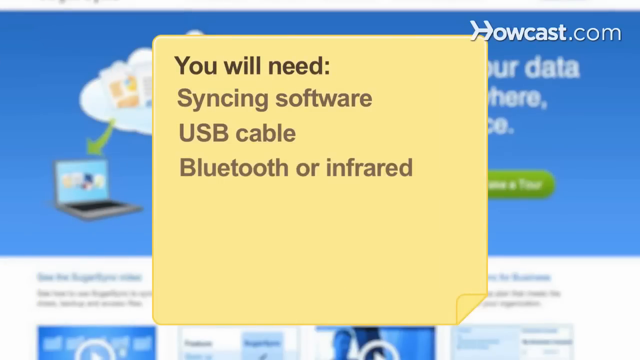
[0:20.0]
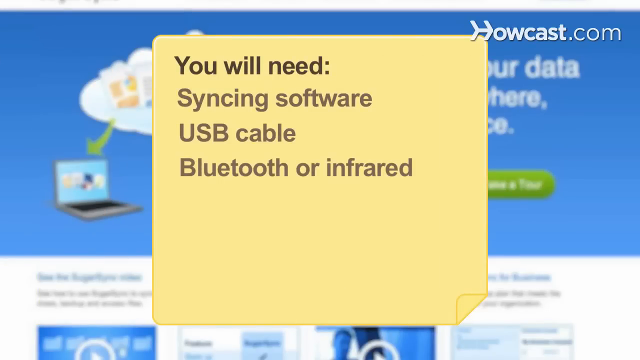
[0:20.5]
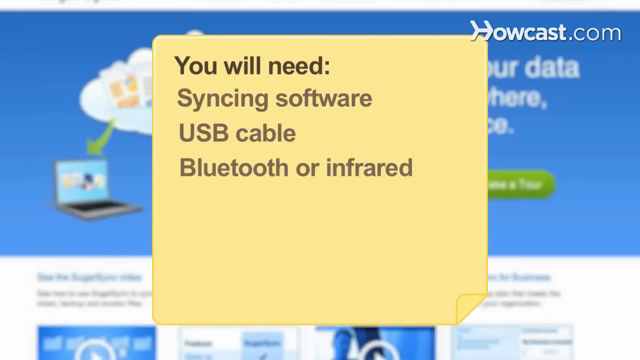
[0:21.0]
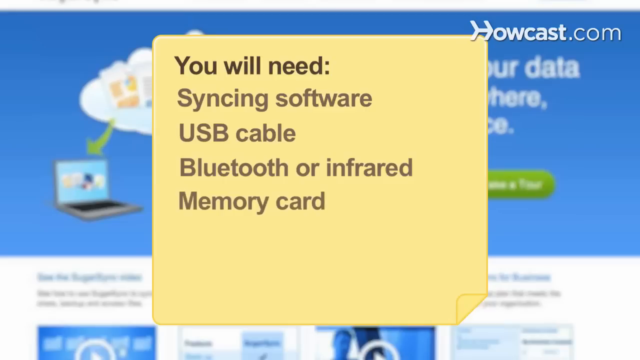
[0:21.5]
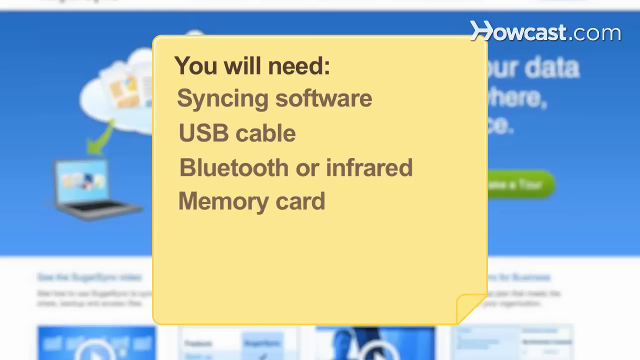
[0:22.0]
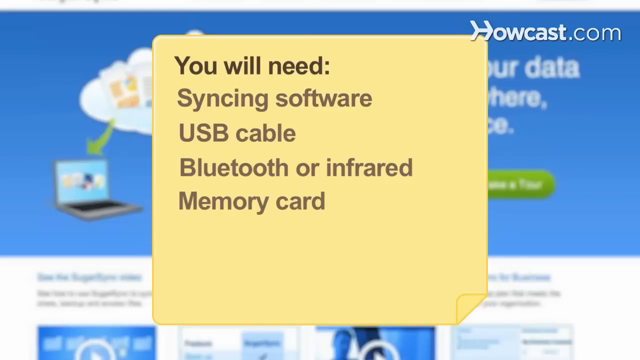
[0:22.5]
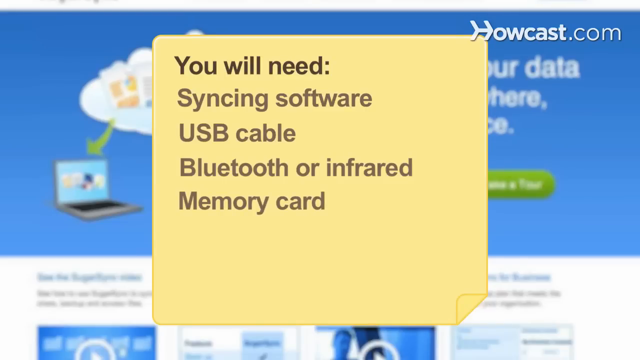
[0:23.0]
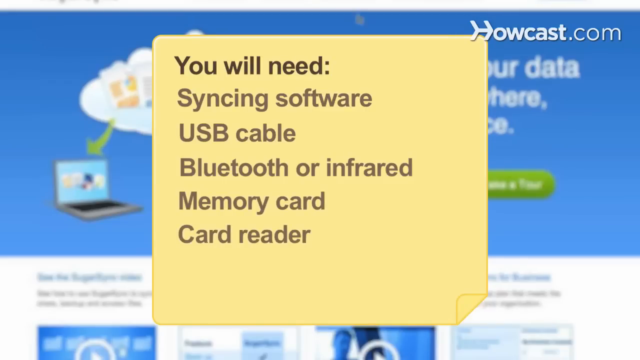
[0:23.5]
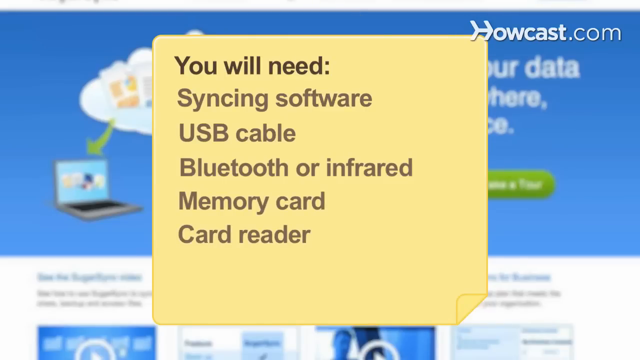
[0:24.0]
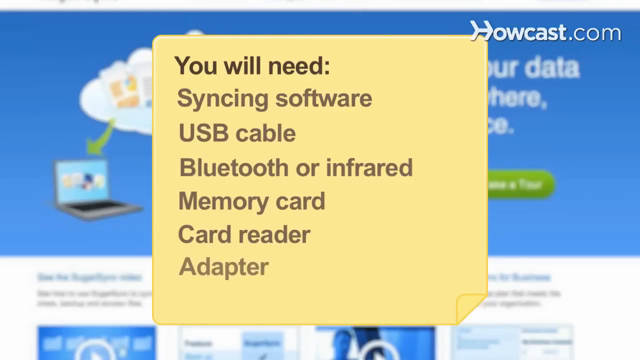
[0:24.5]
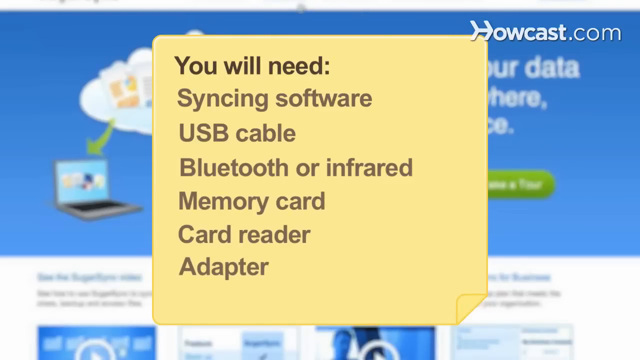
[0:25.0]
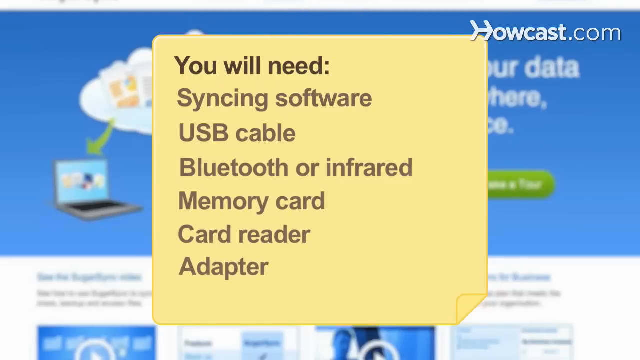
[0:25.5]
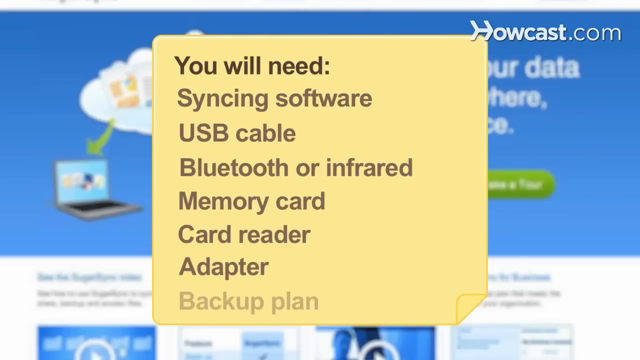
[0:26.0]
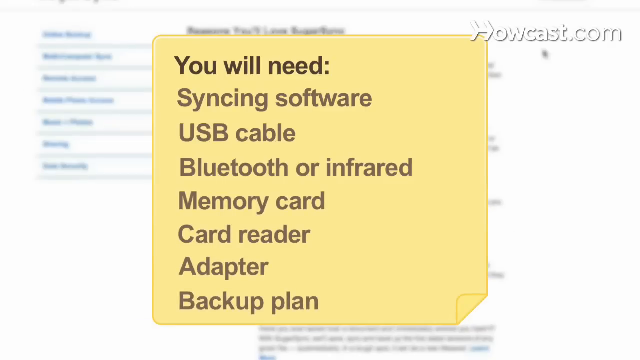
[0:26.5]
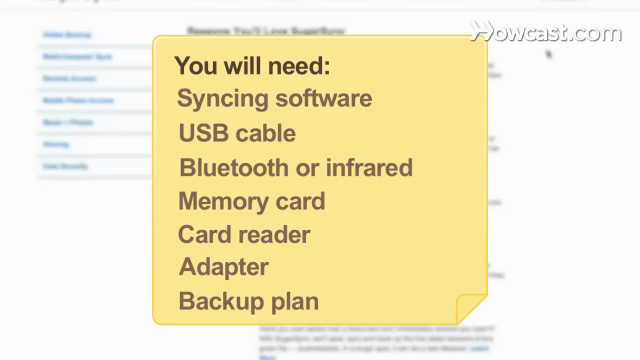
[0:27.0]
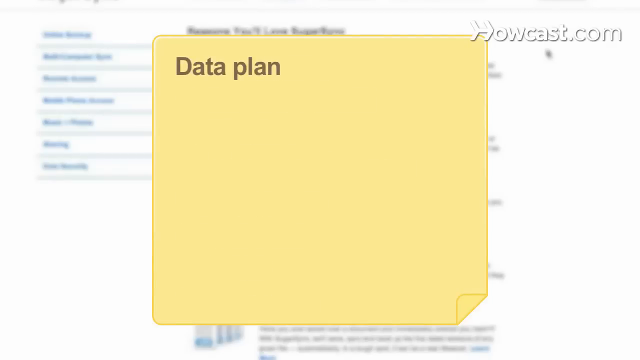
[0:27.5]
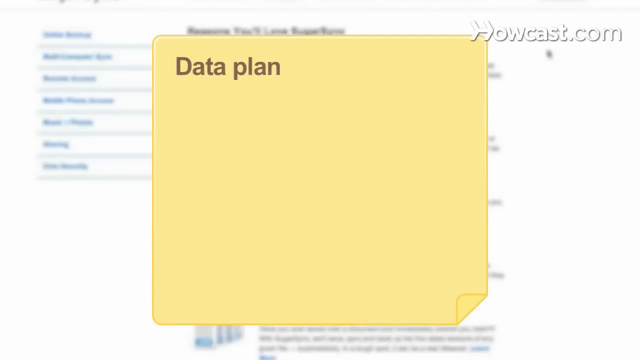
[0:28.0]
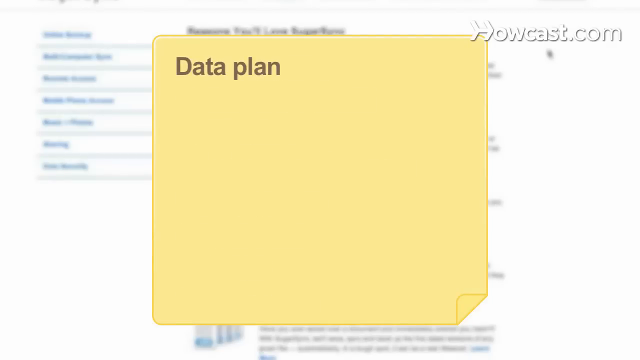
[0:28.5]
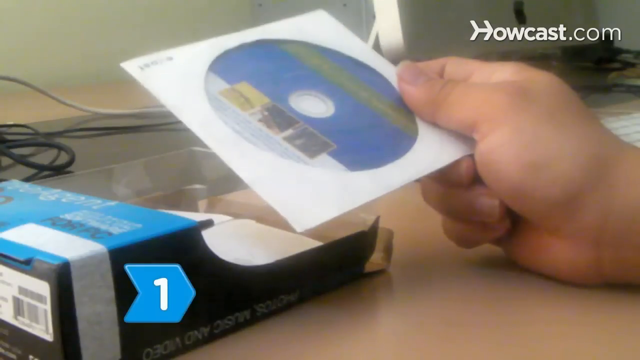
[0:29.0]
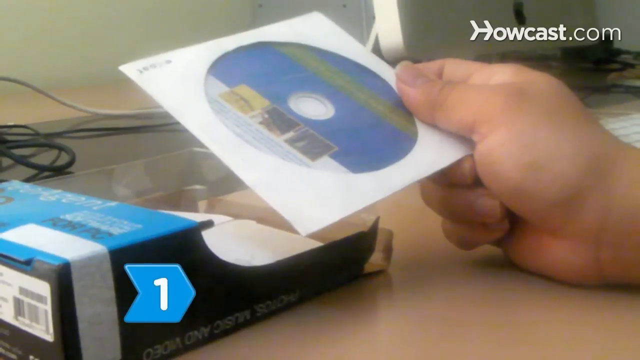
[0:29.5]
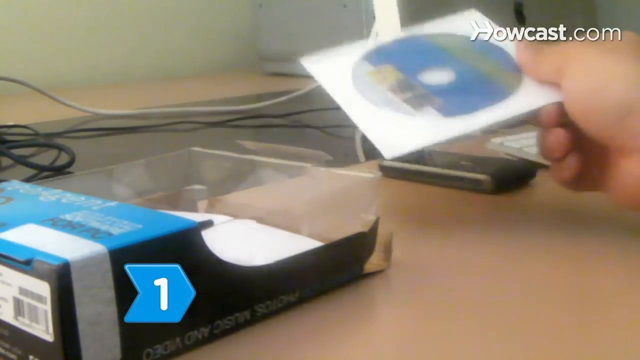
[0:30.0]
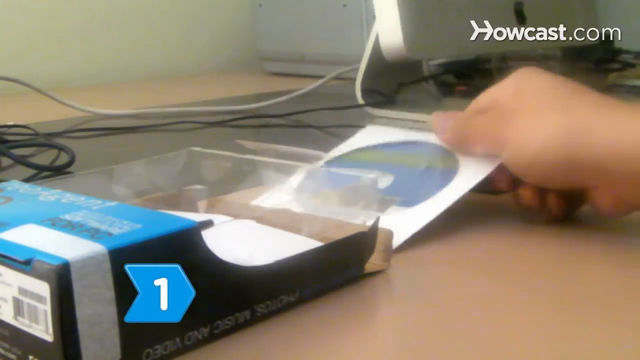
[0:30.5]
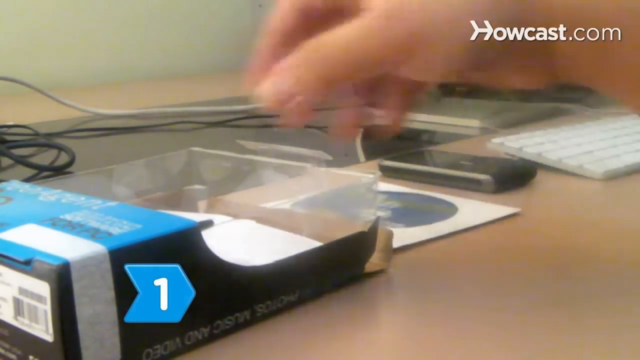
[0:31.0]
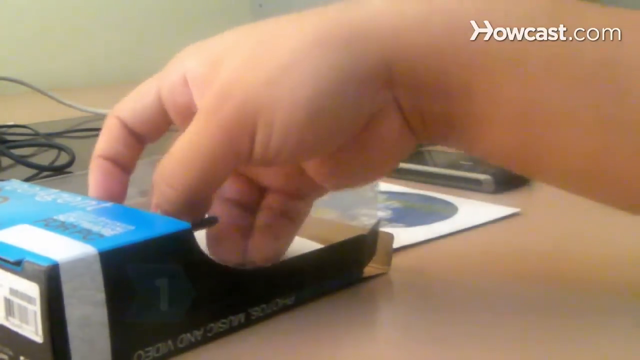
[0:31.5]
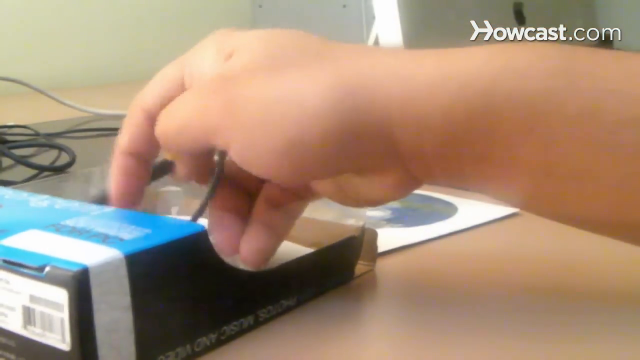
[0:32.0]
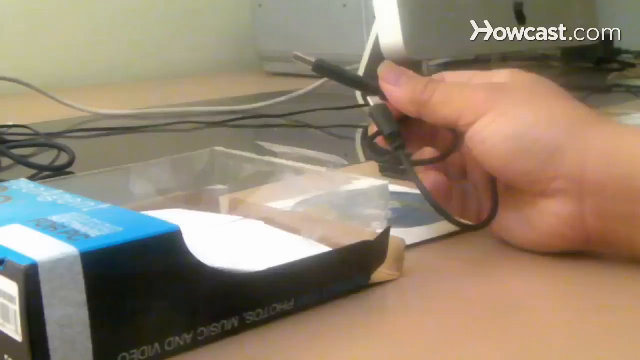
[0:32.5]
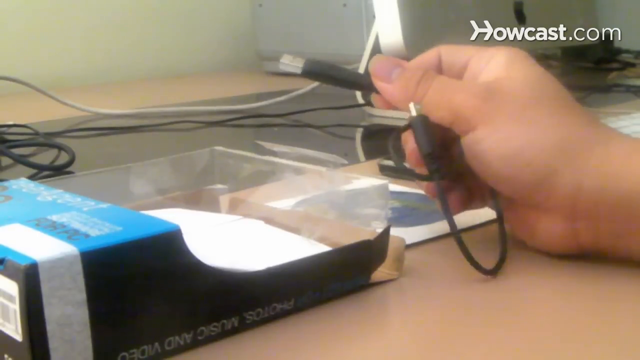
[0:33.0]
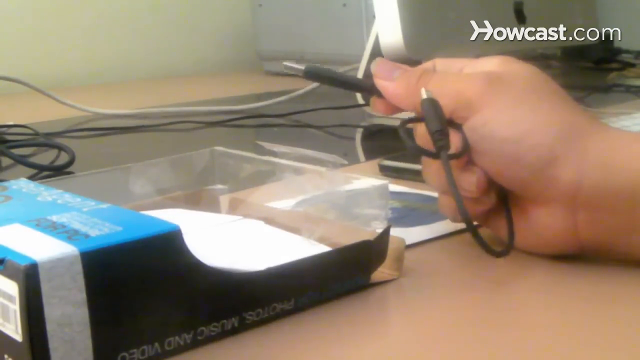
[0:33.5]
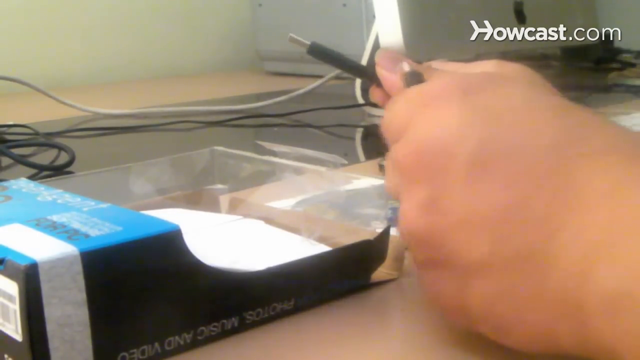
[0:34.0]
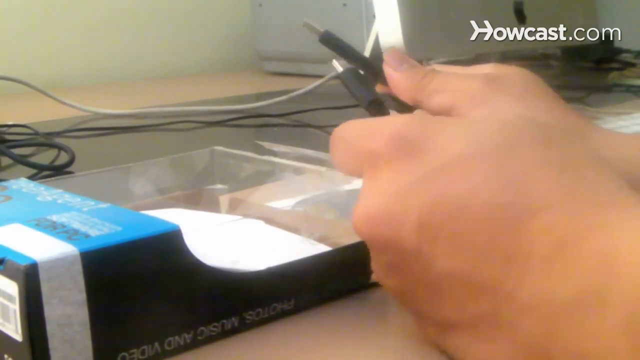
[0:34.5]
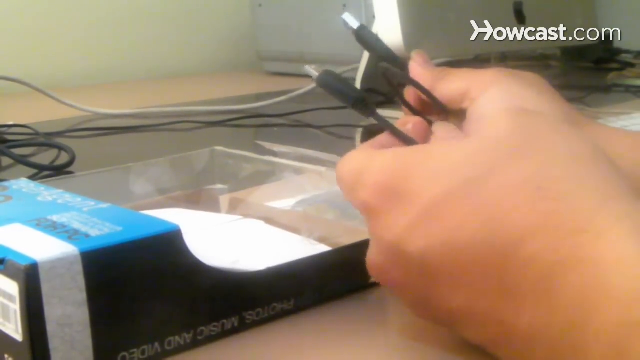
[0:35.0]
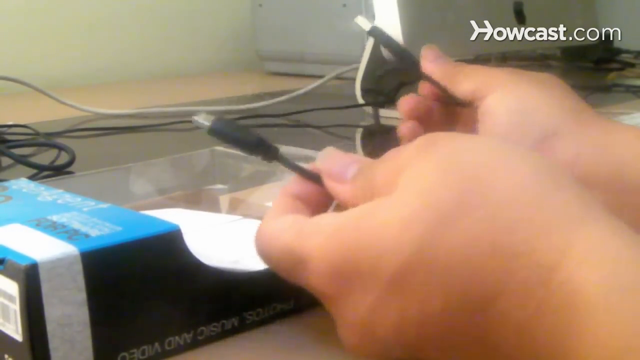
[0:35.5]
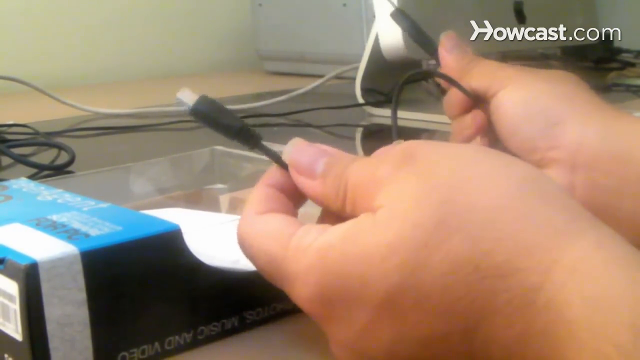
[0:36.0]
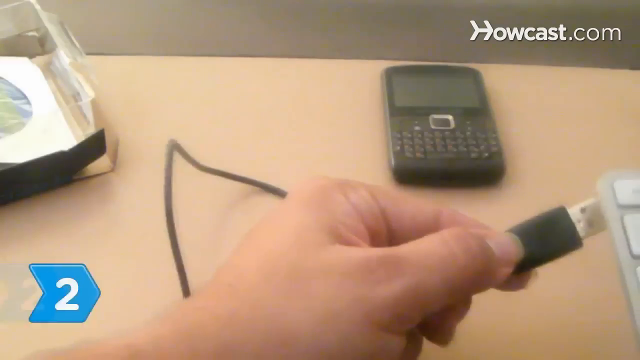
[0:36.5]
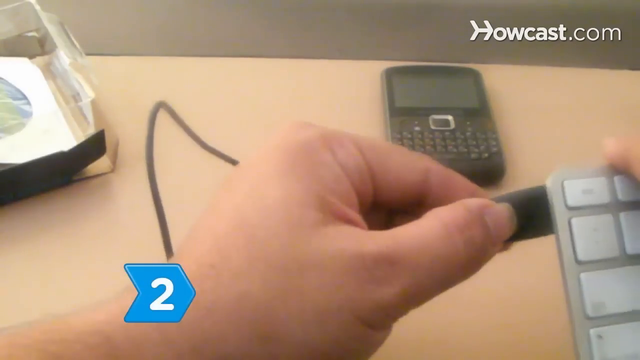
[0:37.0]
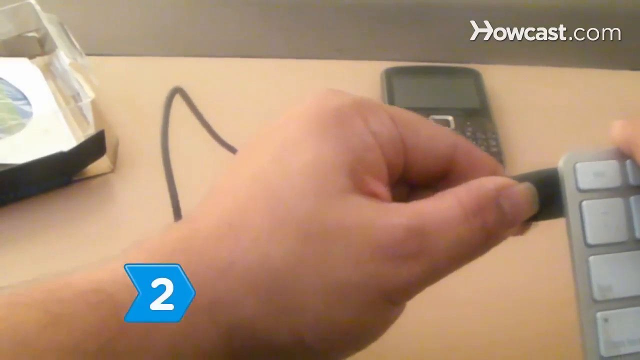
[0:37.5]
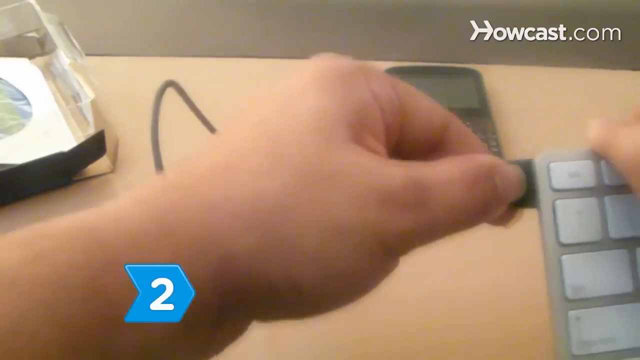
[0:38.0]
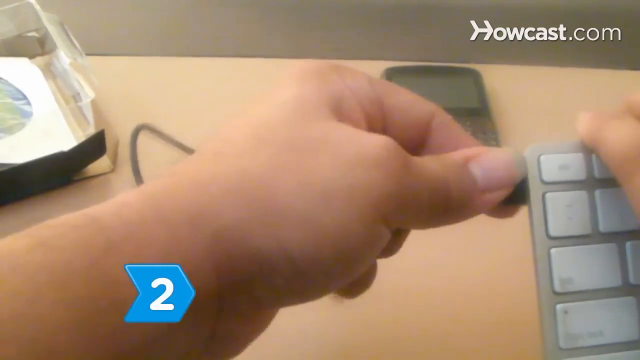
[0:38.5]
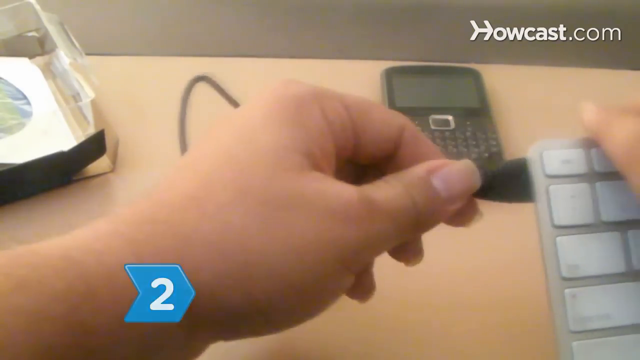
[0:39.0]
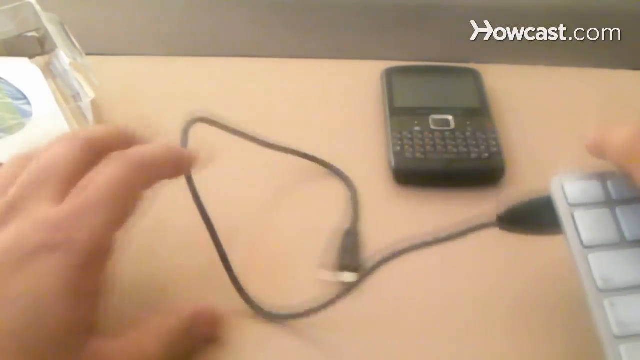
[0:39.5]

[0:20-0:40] A yellow note in the center of the screen tells the viewer they will need syncing software, a USB cable, Bluetooth or infrared, as well as a memory card, card reader, adapter and backup plan; it quickly adds that they also need a data plan. Behind the yellow note, some kind of adjustment seems to be happening in the background, but it is not clearly shown. A hand holds what looks like a CD, which came in a box together with the necessary cable, a USB cable or some kind of adapter for the phone; the CD is possibly a driver or software for using the cable. The user connects the adapter to the PC, and the other end seems to be for the phone.